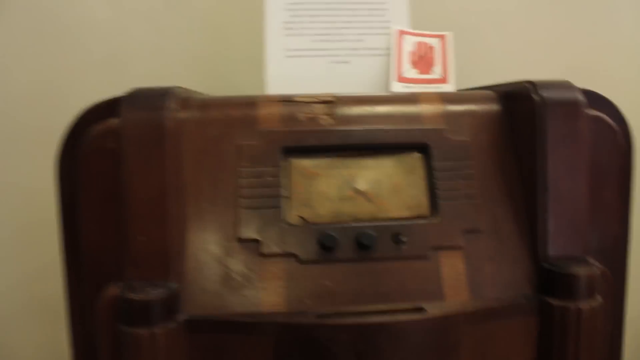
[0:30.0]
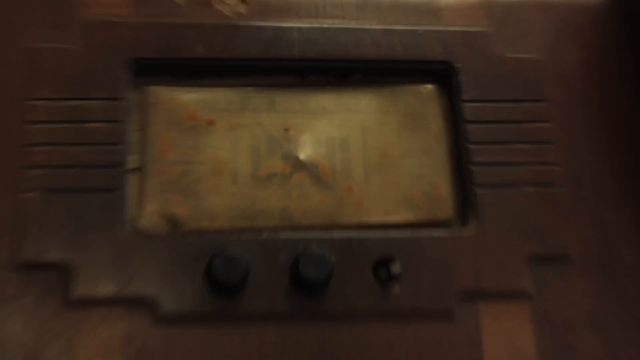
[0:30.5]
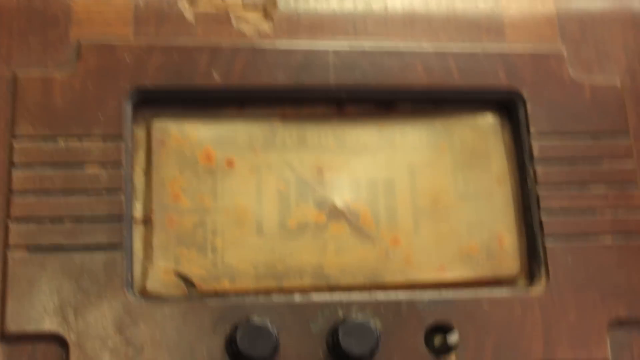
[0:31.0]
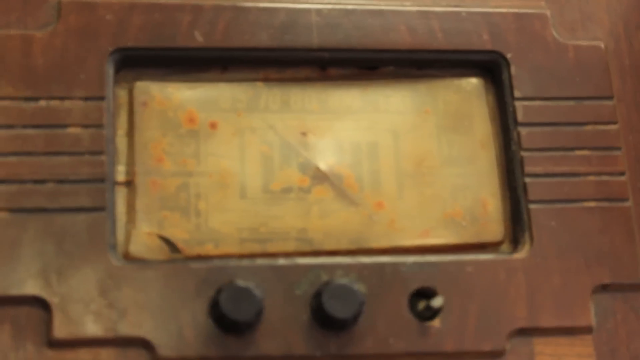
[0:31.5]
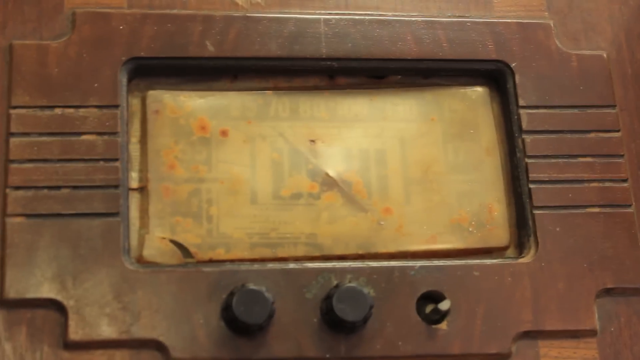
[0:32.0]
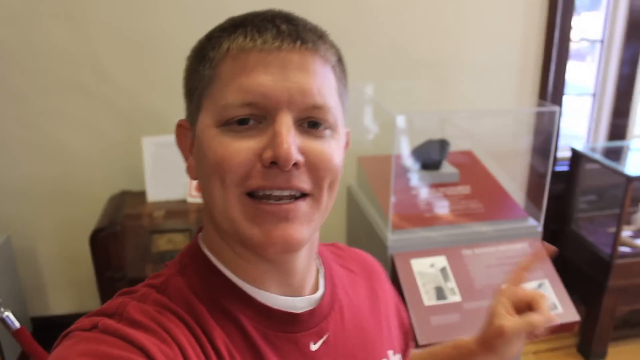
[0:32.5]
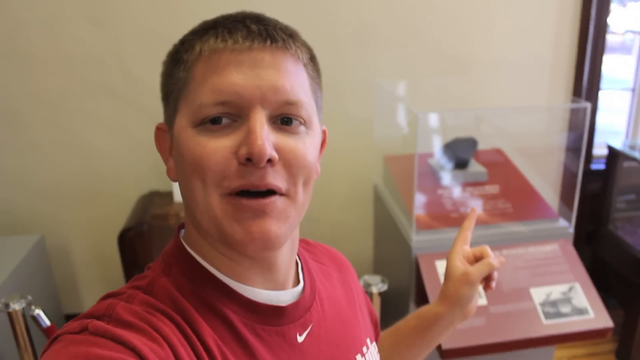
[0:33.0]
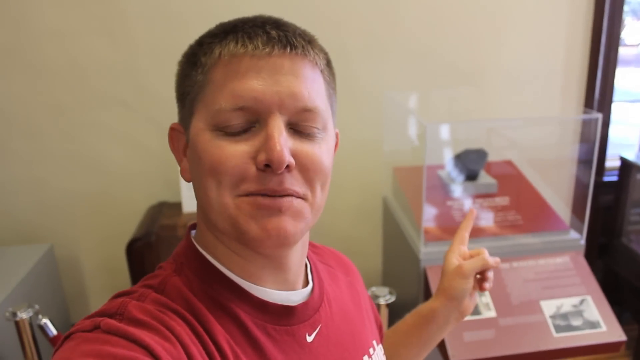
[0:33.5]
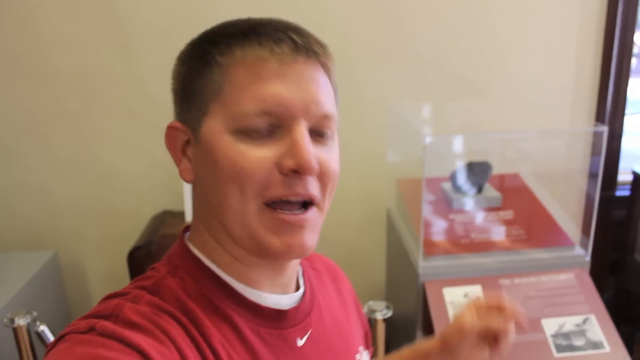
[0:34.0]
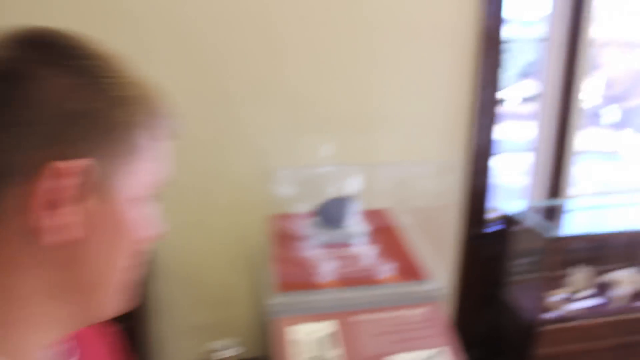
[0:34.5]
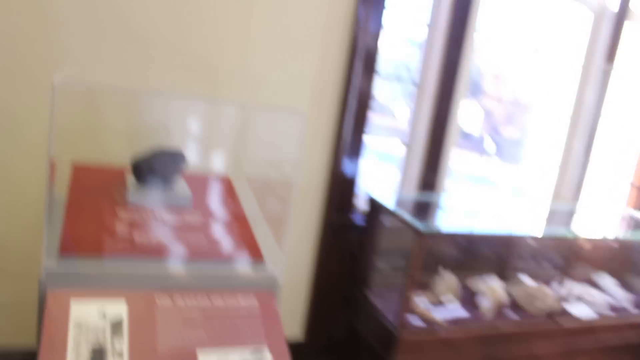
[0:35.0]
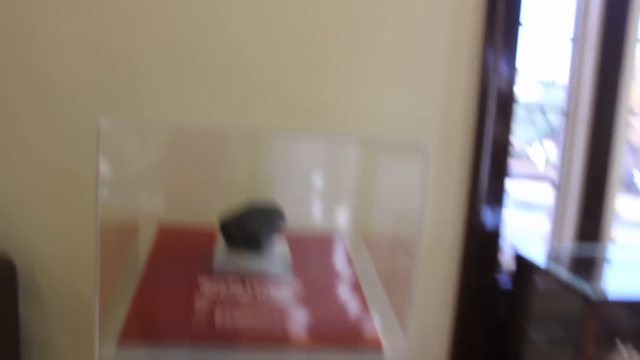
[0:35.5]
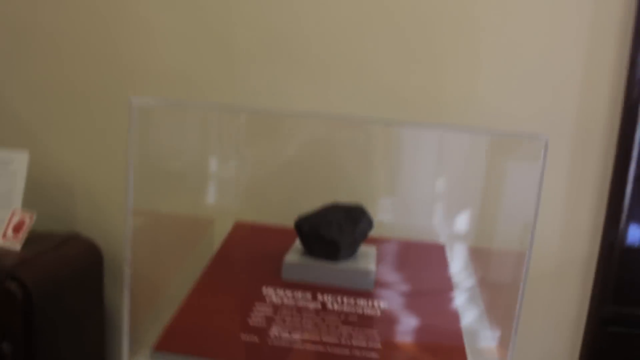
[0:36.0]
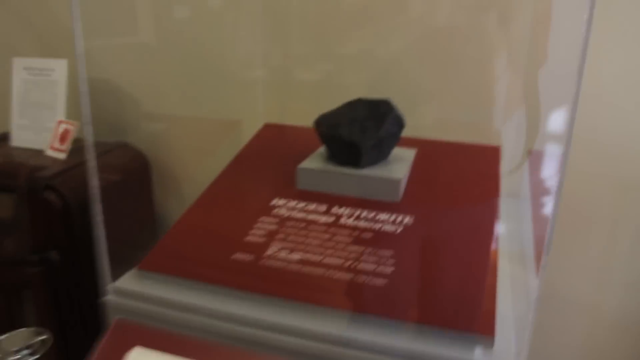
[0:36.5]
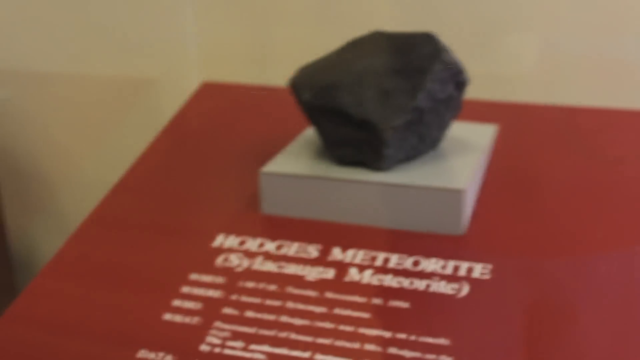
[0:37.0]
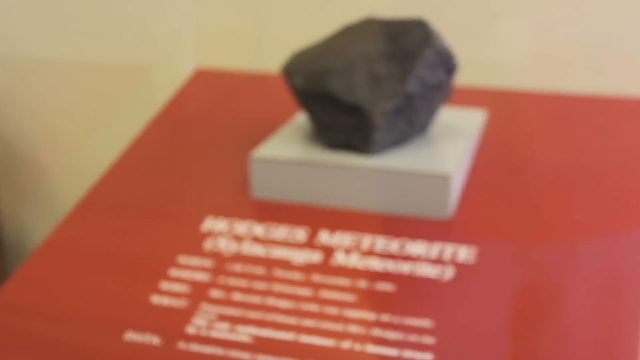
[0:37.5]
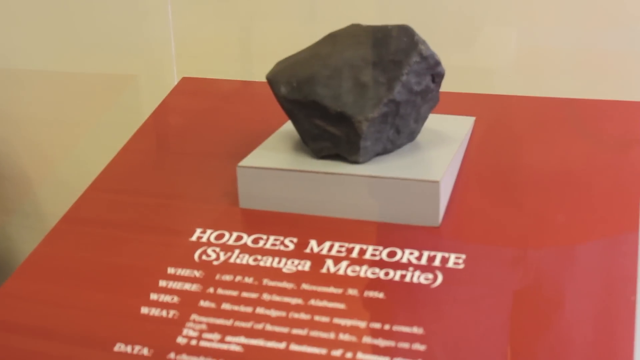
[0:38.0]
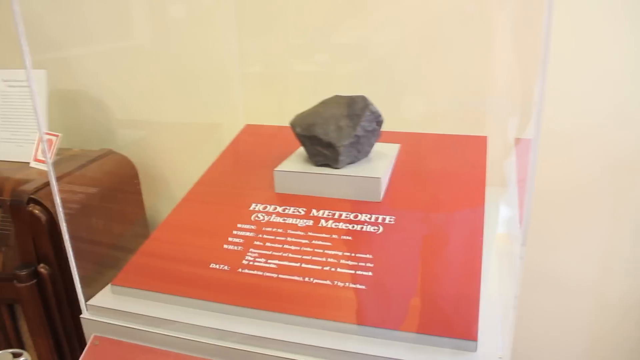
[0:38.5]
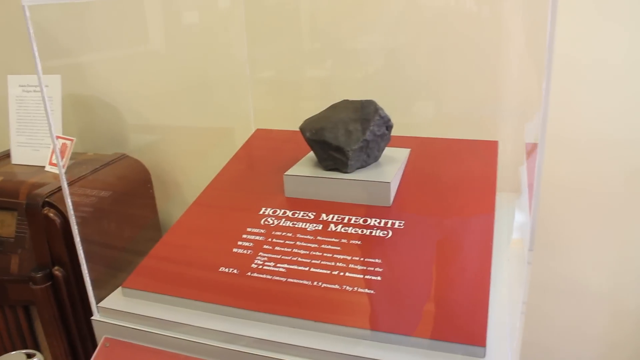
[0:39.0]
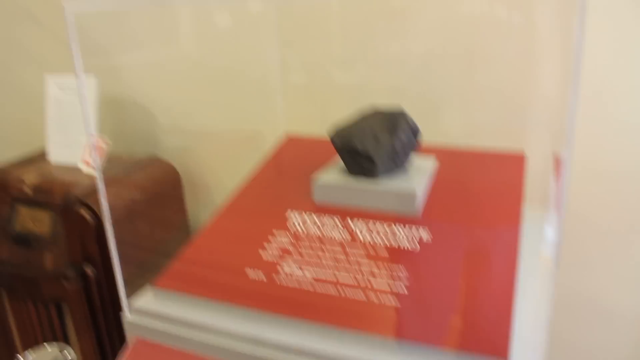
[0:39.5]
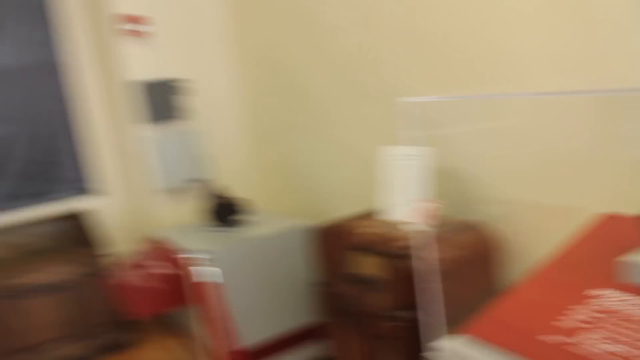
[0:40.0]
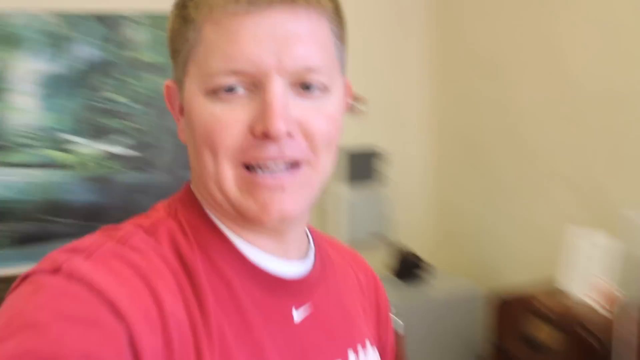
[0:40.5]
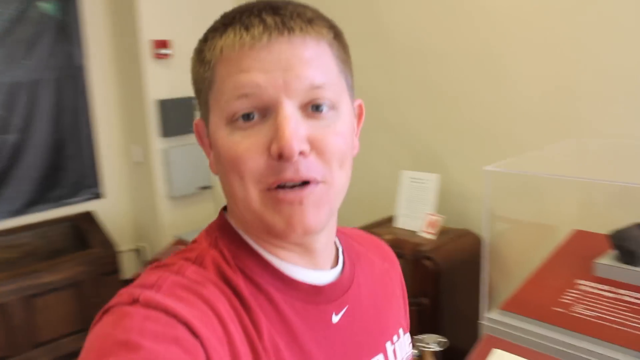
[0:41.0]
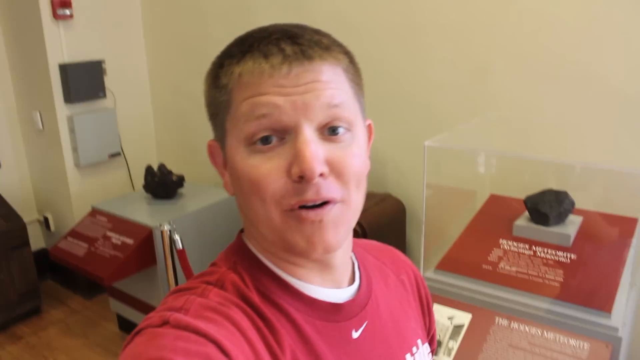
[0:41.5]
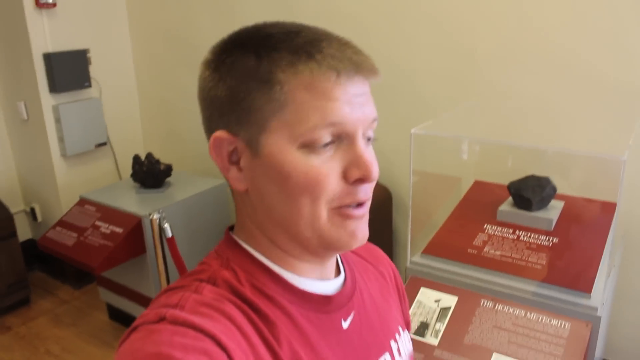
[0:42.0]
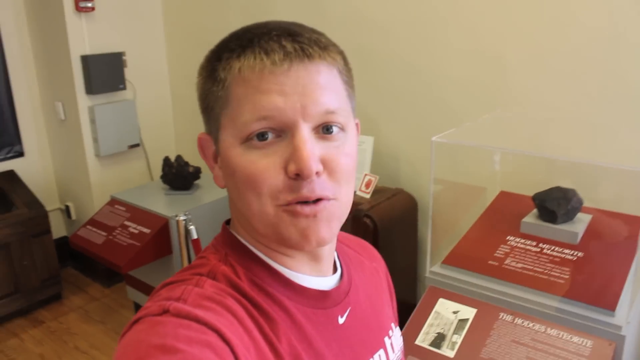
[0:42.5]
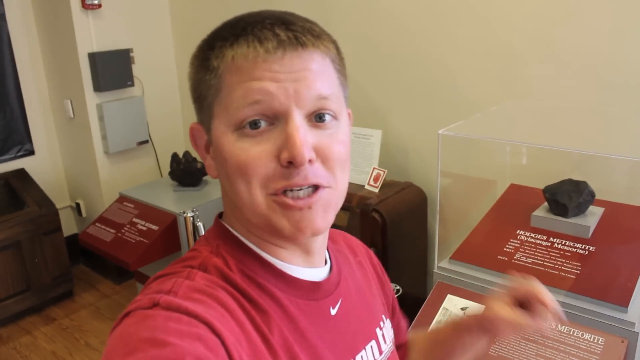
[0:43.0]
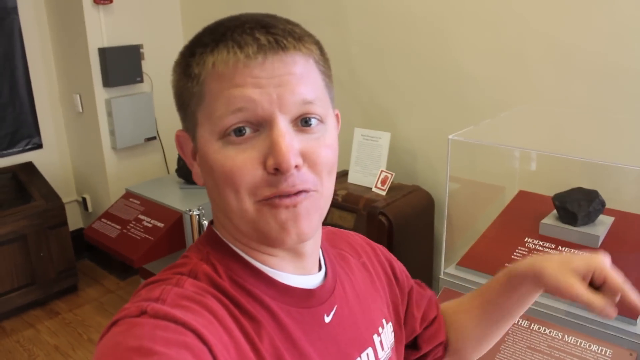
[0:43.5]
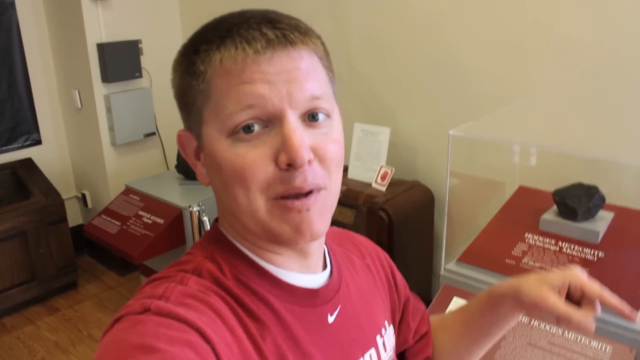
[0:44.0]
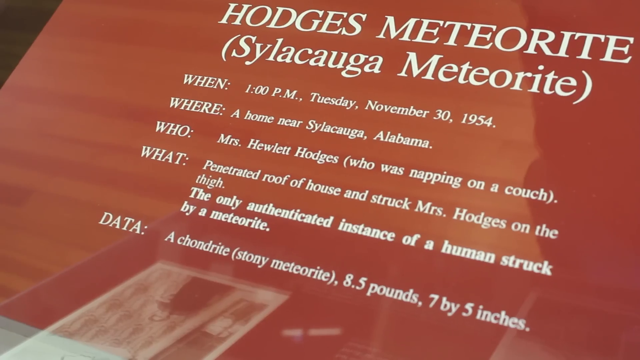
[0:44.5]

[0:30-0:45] Something in the sky appears for a moment, followed by what seems to be an old radio. A man talks and points at a picture of a rock sitting on top of a marble thing on top of an orange thing. The radio appears again, then the man speaking and pointing at the display with the rock, which is kind of on an orange square with a sort of light gray square underneath it. The radio, which looks really old, is shown again, and the same sequence keeps repeating over and over: the radio, then the man talking and kind of pointing toward the display.